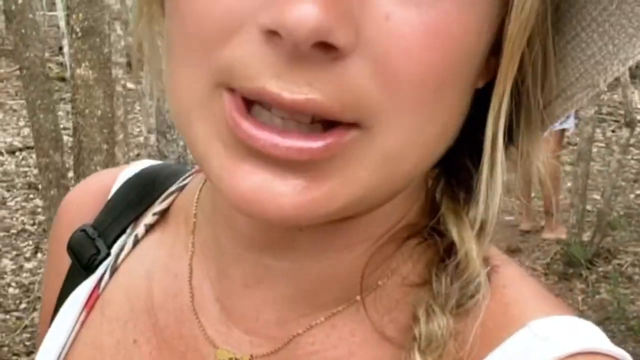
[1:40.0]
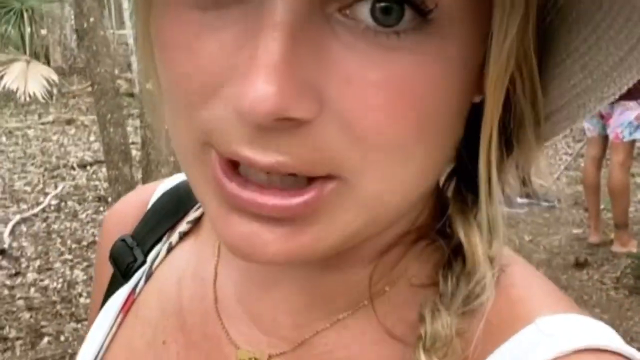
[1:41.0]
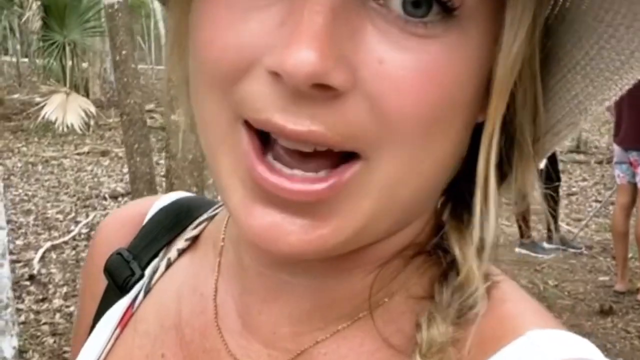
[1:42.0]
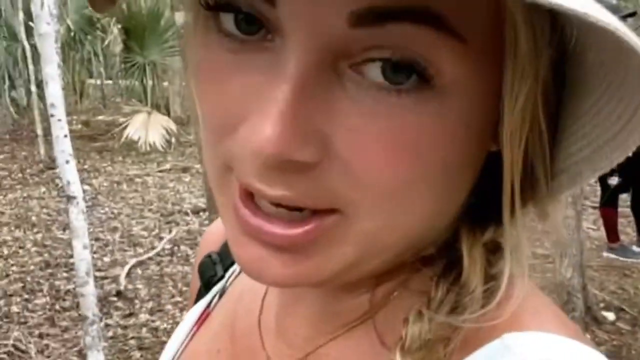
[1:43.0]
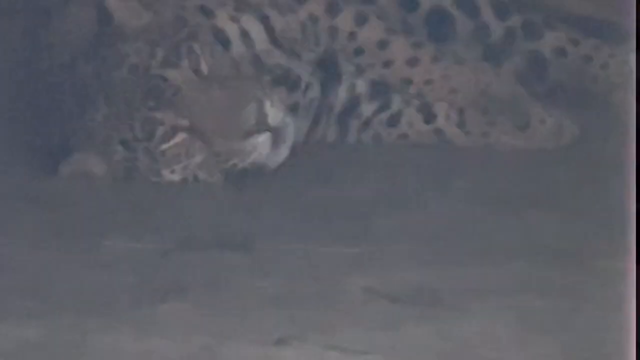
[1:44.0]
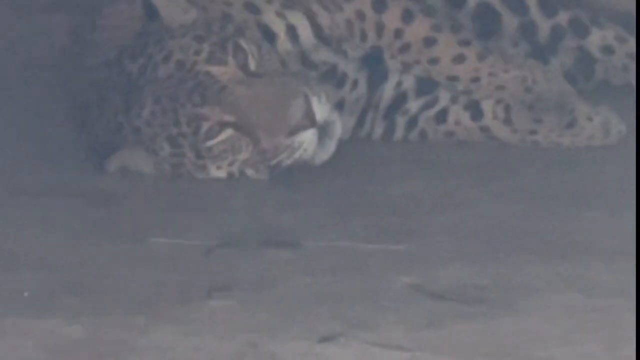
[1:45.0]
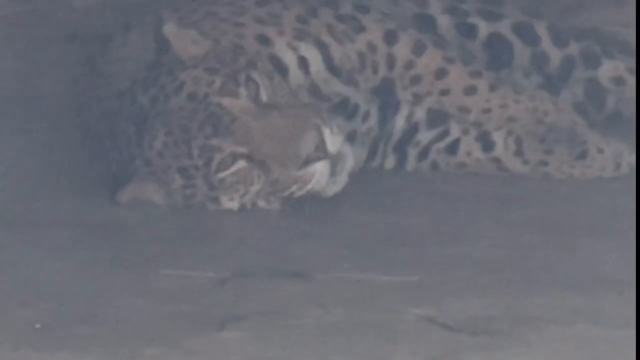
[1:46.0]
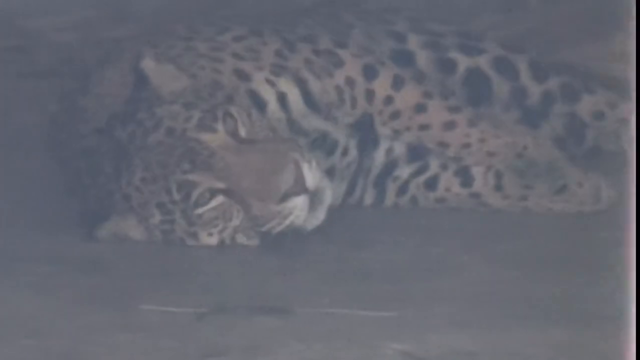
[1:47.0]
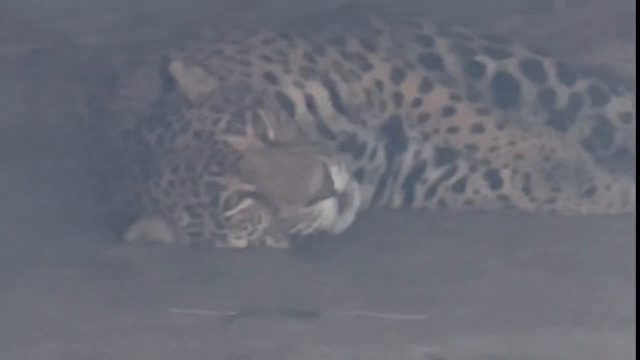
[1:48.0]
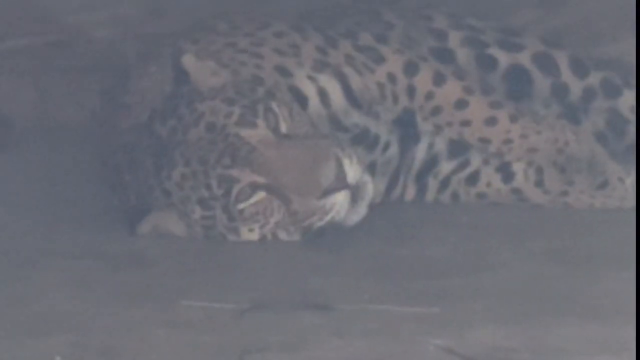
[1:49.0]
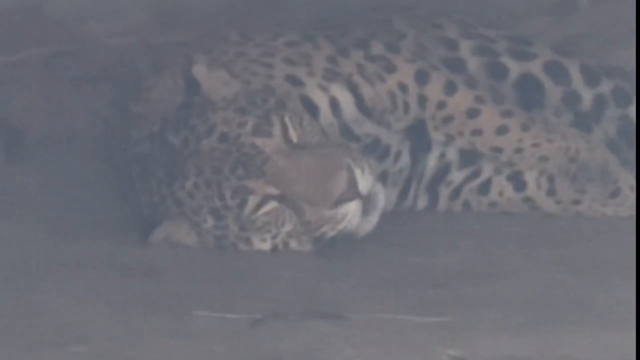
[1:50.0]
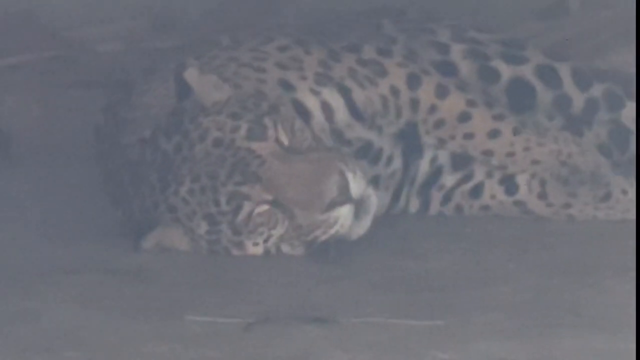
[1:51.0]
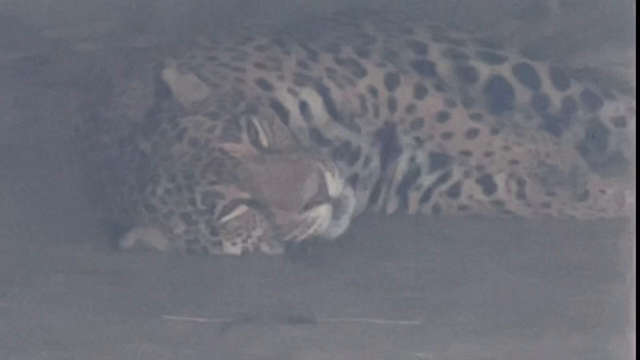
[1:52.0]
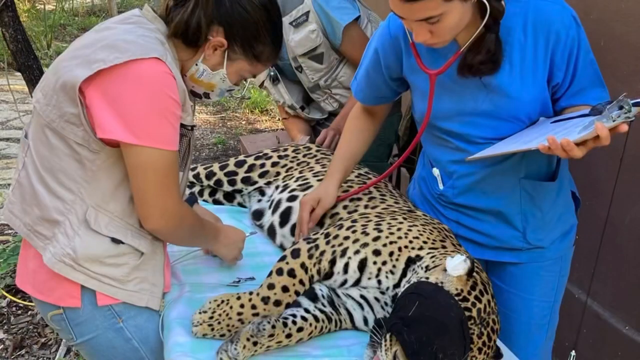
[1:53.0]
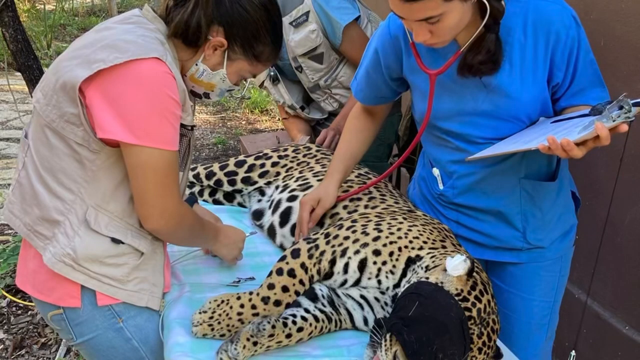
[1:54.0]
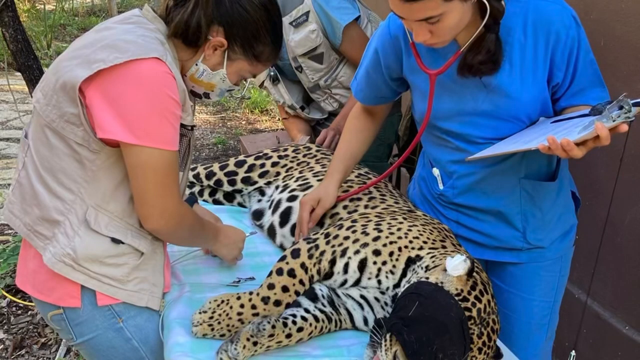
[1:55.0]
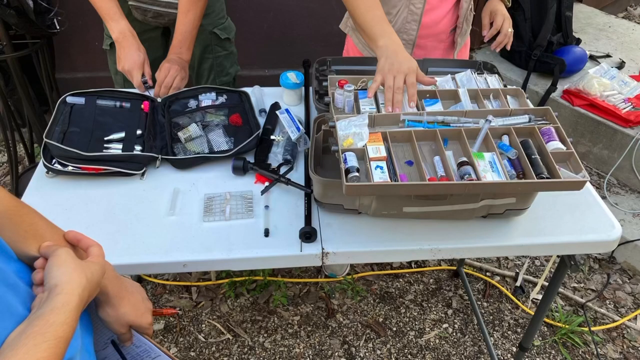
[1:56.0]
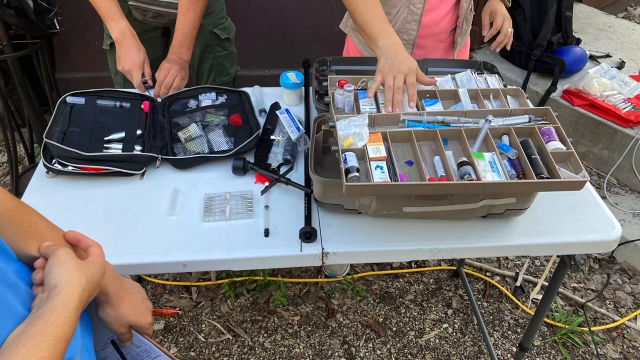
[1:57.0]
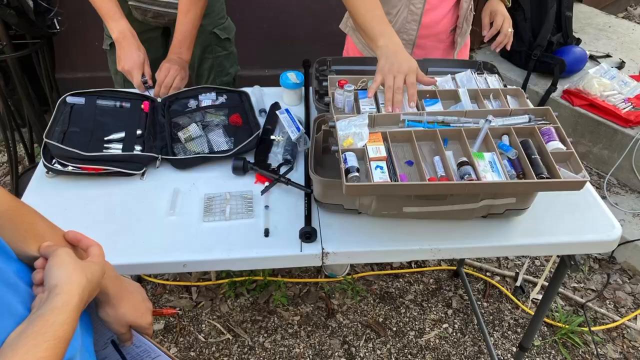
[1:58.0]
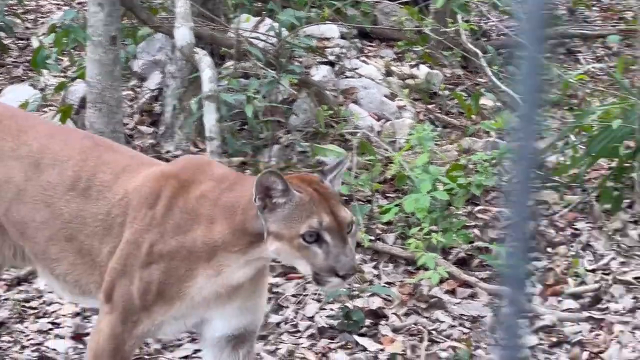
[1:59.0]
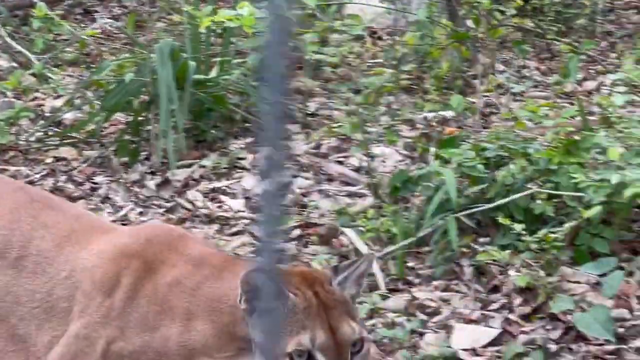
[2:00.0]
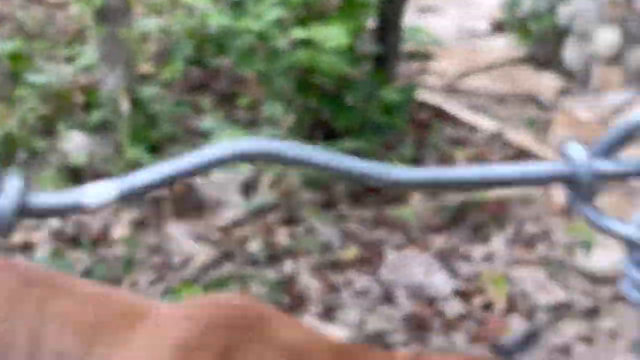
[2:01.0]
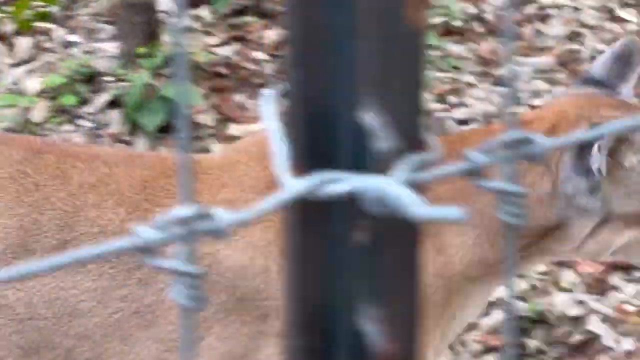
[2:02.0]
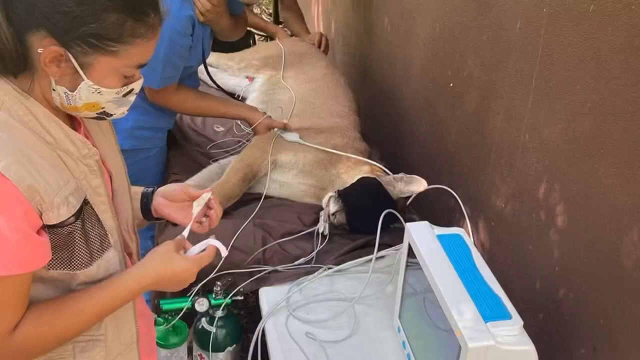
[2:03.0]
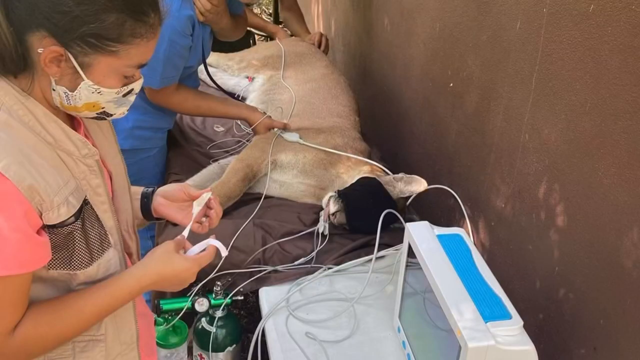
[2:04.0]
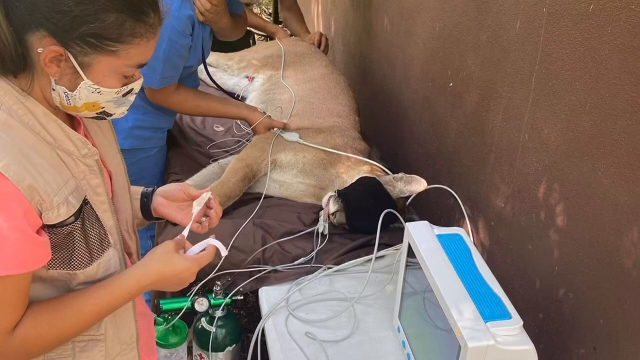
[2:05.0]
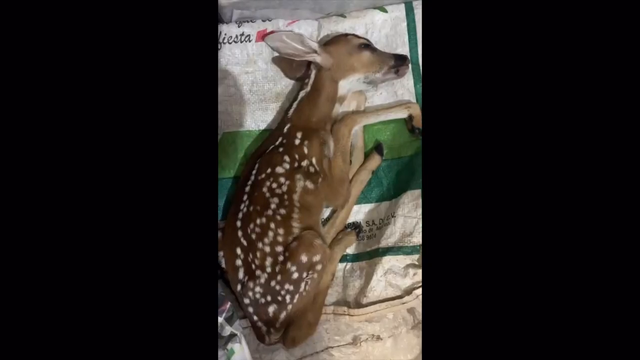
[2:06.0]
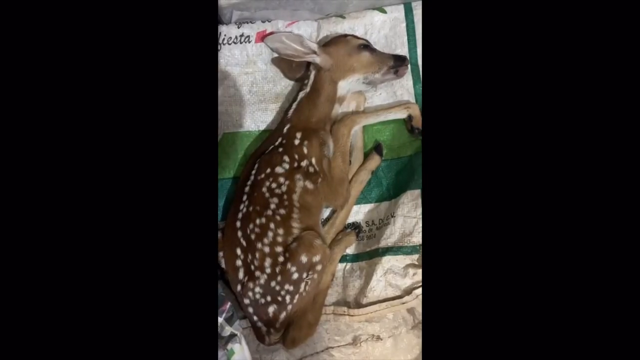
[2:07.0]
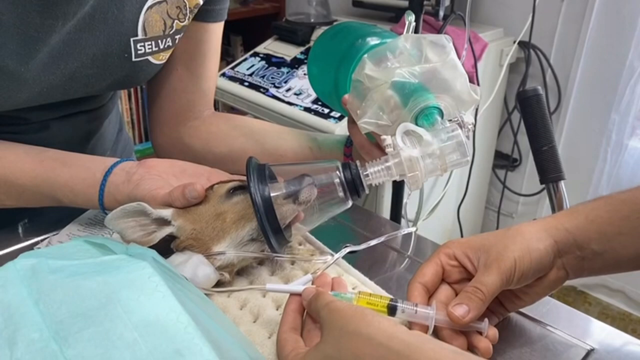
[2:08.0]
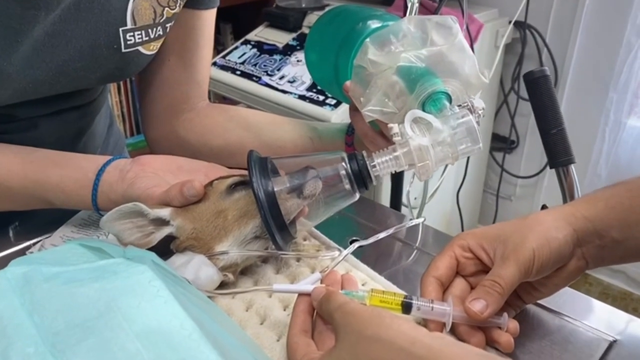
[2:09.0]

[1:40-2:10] A woman talks while holding the camera in front of her. A tiger lies down, looking very sick, and is being treated by some of the people she is with. The place looks like a zoo where very sick animals are being treated. Different kinds of animals are shown, some put on oxygen to help them keep breathing; the people apparently rescue sick animals from the forest that need medical attention. Injections and medical supplies are used to attend to the sick animals.